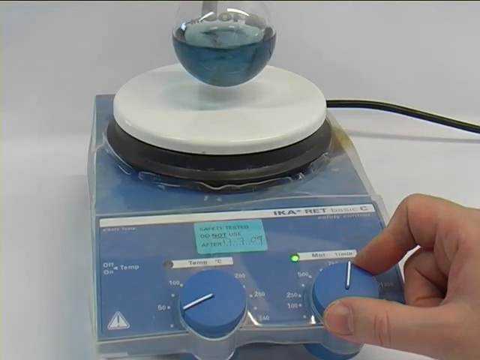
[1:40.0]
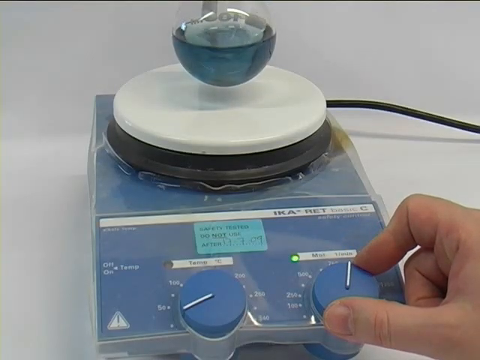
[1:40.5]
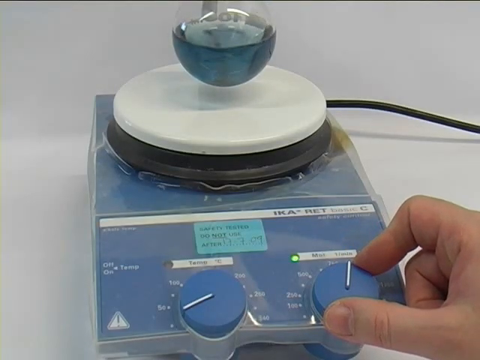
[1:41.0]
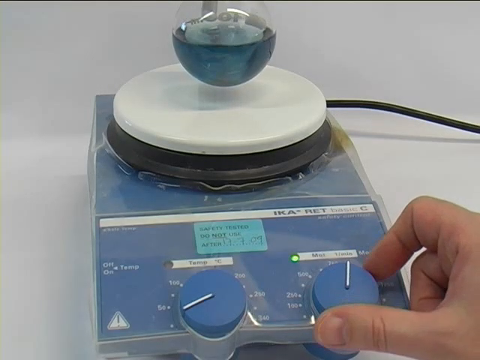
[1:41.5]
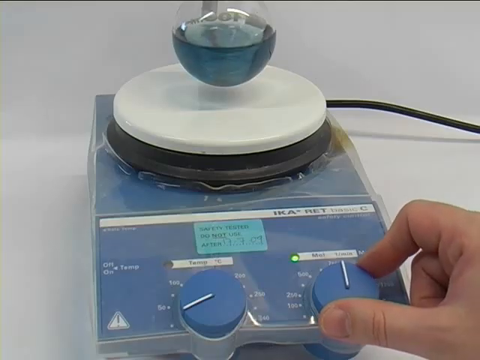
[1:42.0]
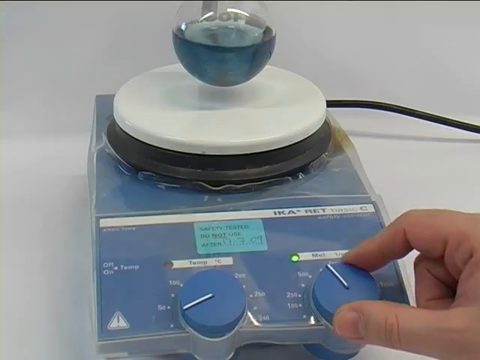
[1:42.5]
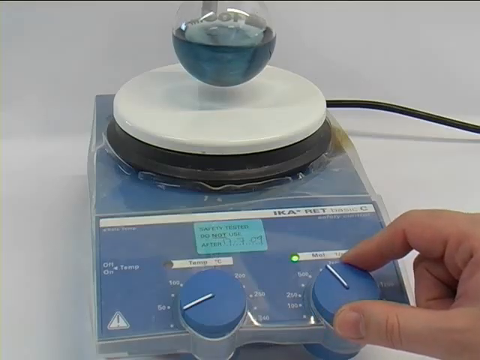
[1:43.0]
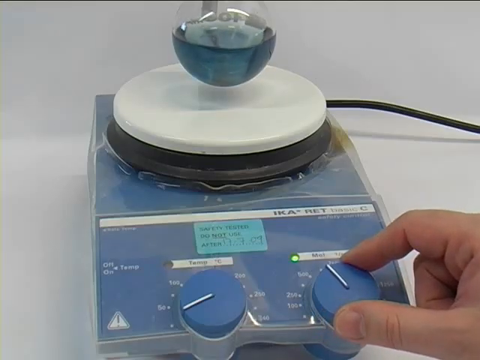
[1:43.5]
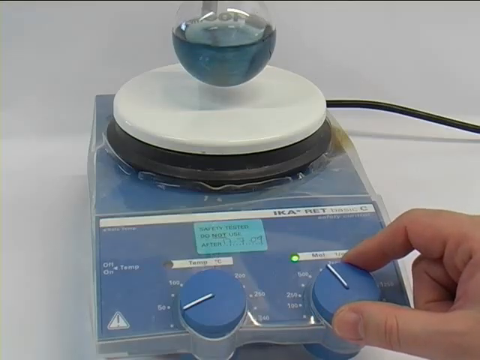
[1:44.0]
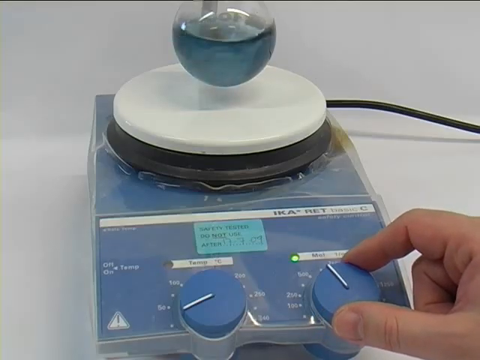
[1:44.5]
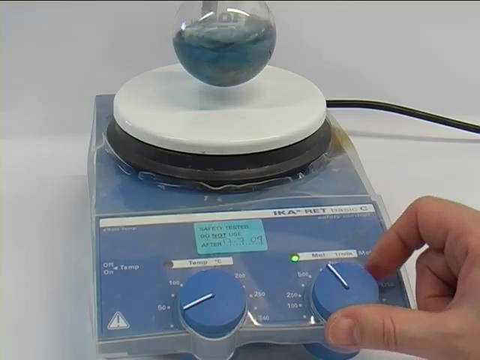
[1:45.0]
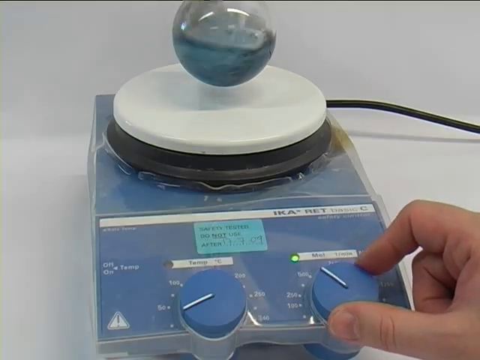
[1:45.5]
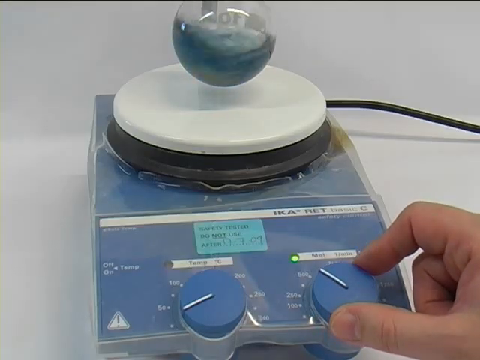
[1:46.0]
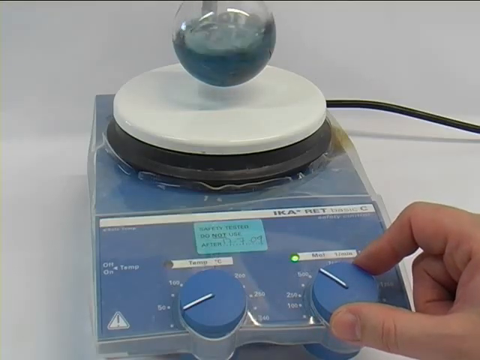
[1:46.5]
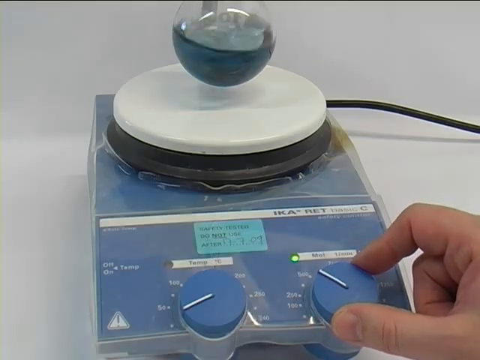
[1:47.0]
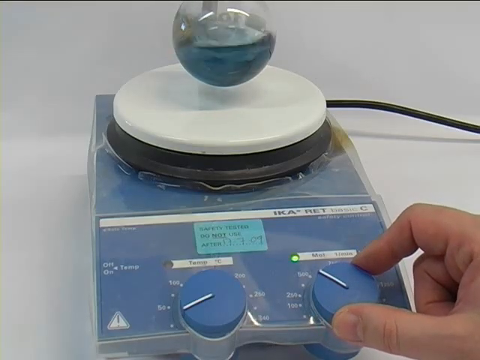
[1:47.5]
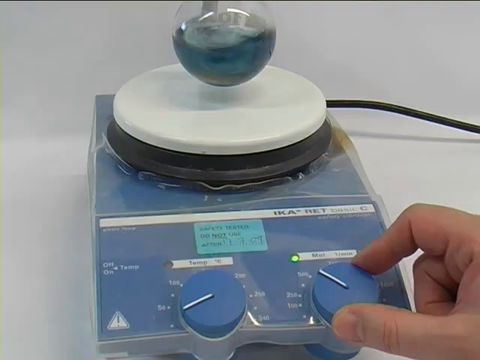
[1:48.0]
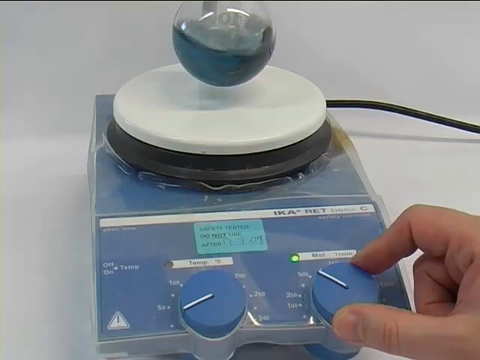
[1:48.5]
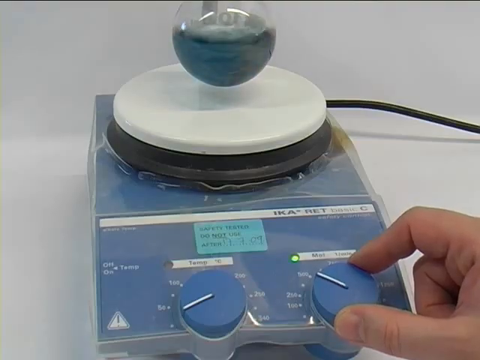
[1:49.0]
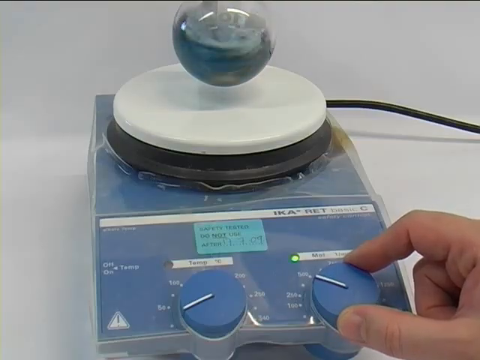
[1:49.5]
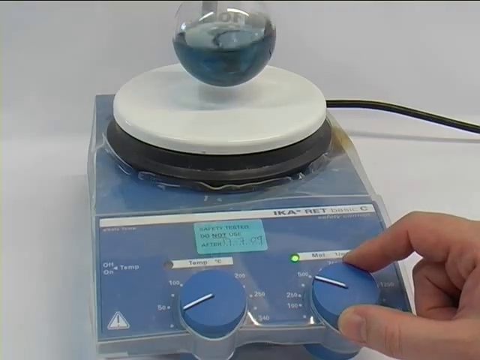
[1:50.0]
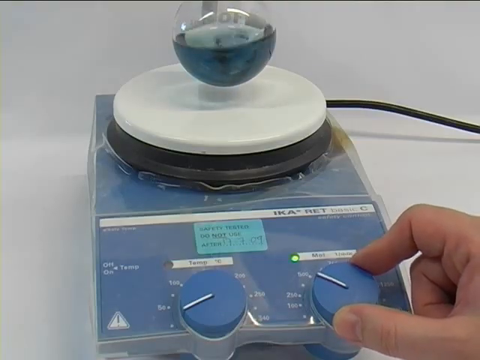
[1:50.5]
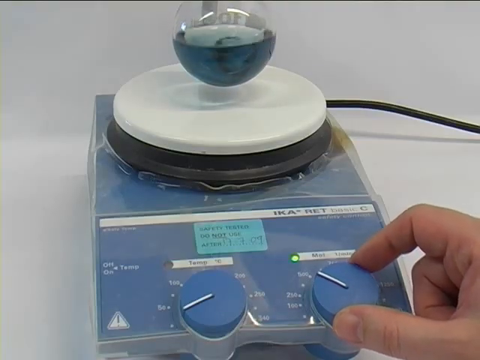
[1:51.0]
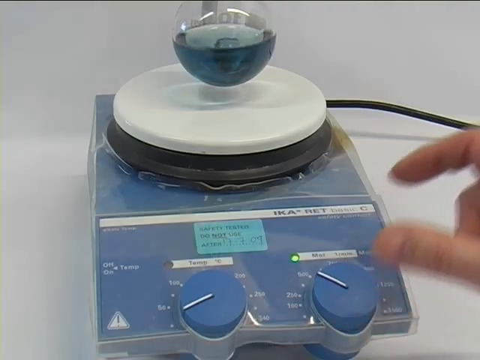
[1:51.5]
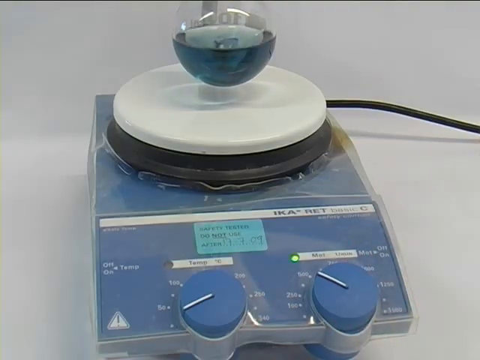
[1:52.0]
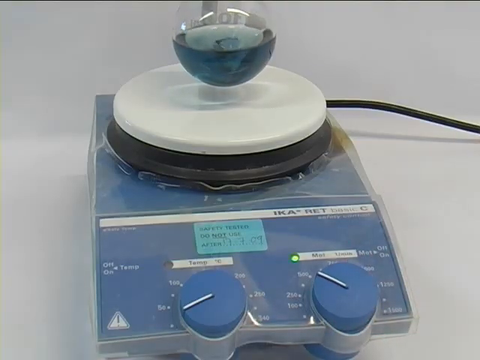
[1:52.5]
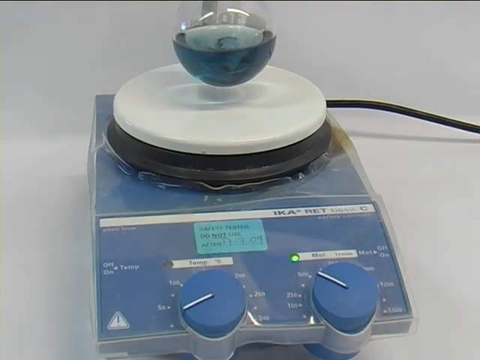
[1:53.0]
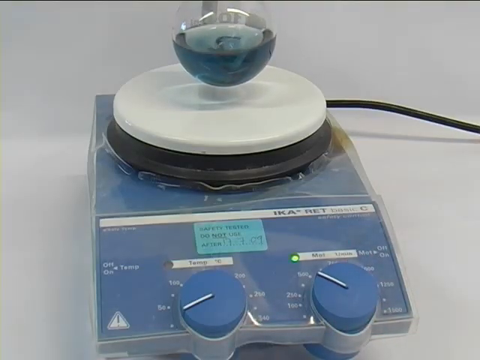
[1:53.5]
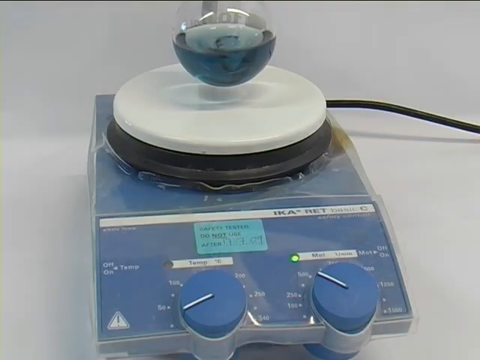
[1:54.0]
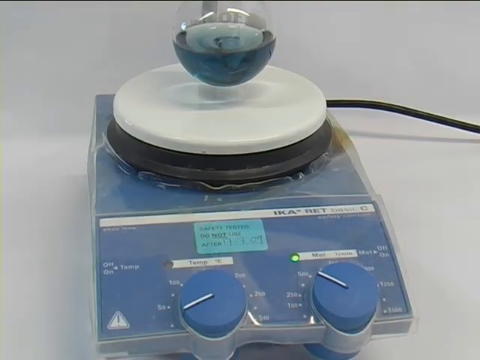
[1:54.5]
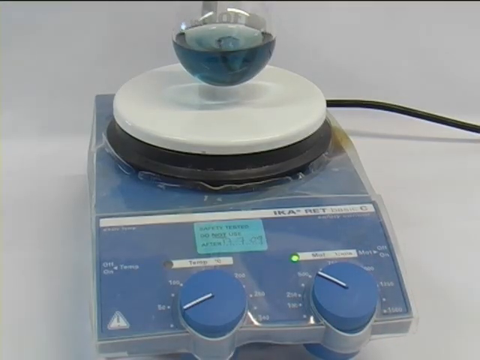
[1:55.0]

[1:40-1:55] The blue machine has the letters "IKA RET BASIC" on it, and a light blue sticker says "safety tested, do not use after 7-7-07." Two blue knobs point to different settings; one says "temperature," and the word on the other apparently says "max." A circular white table is on top of the machine. A person with a white hand turns the knob counterclockwise. What appears to be a vial is right over the circular table. An electrical cord goes out to the right from behind the machine along the wall. The table and the wall are white. The fluid inside the vial starts spinning clockwise like a tornado. The screen then goes to a black background with white text in the middle that says "magnetic stirring."